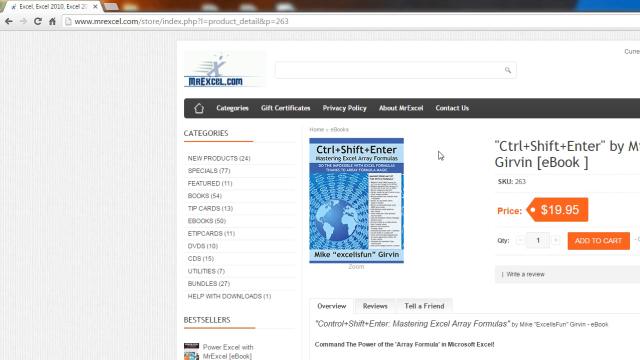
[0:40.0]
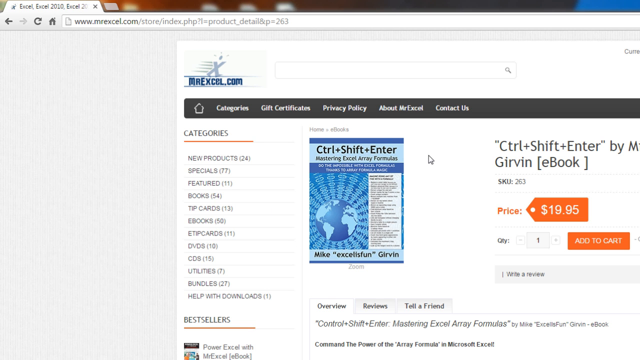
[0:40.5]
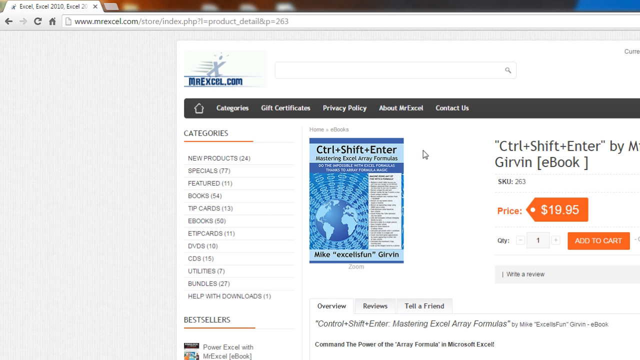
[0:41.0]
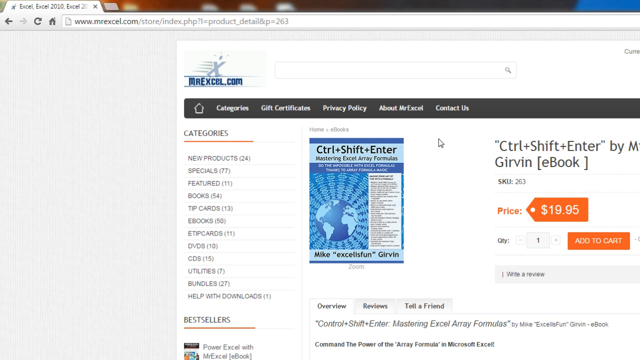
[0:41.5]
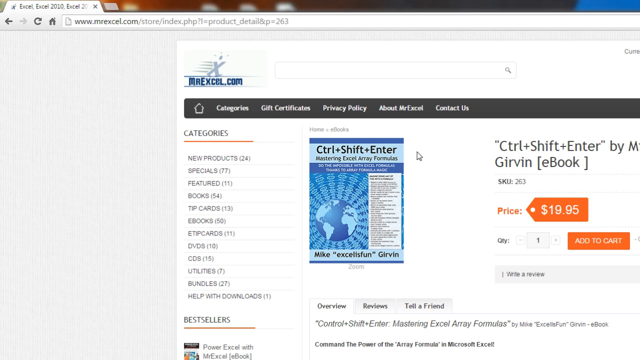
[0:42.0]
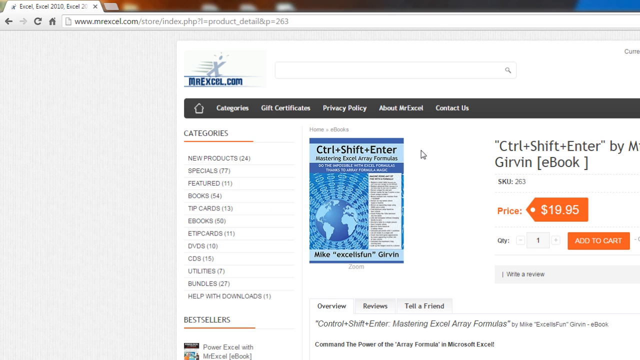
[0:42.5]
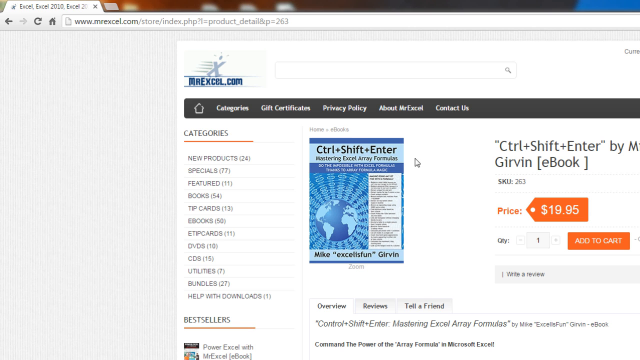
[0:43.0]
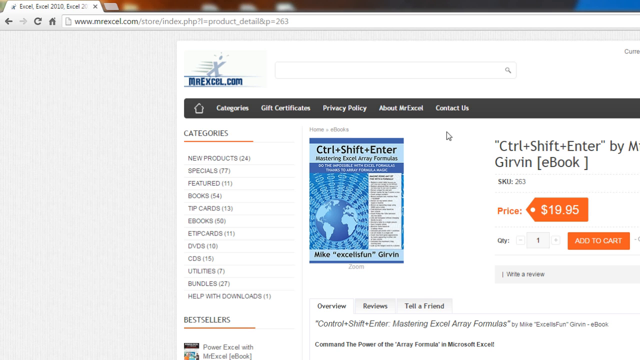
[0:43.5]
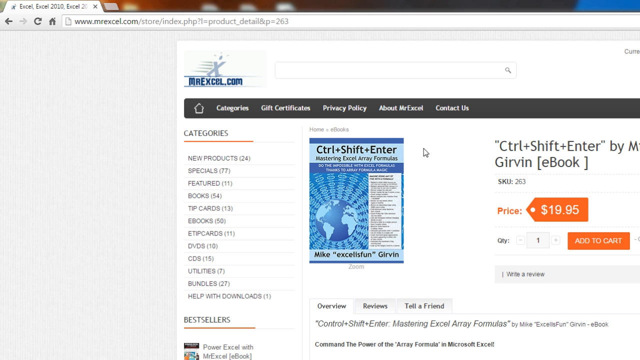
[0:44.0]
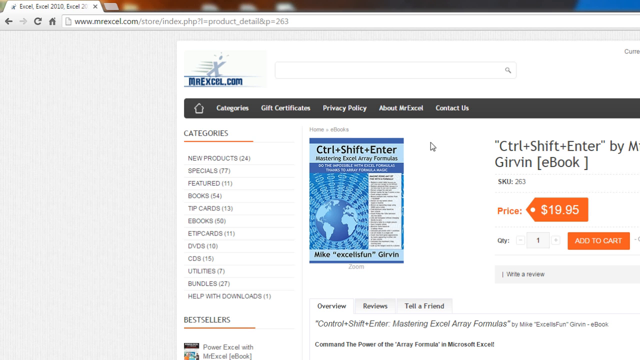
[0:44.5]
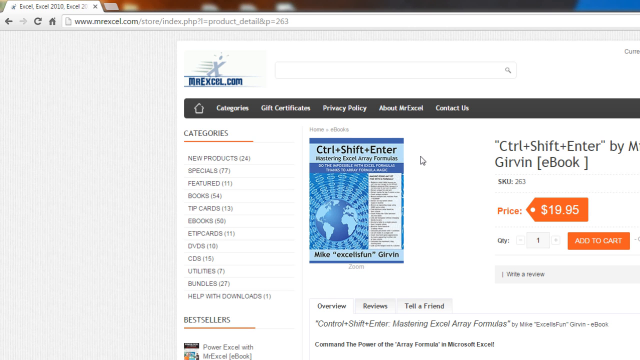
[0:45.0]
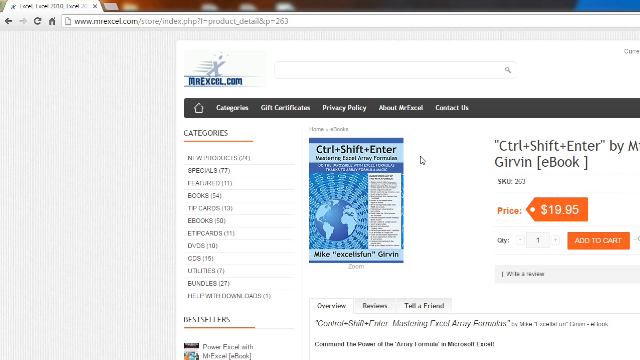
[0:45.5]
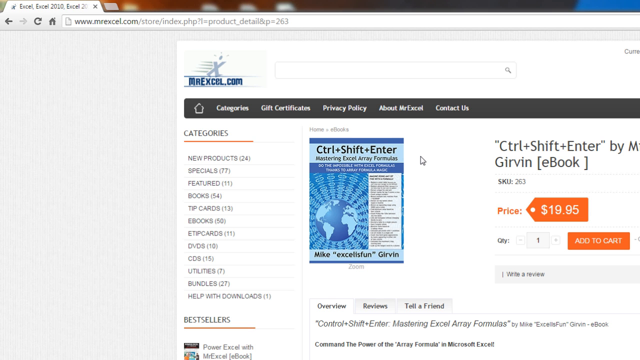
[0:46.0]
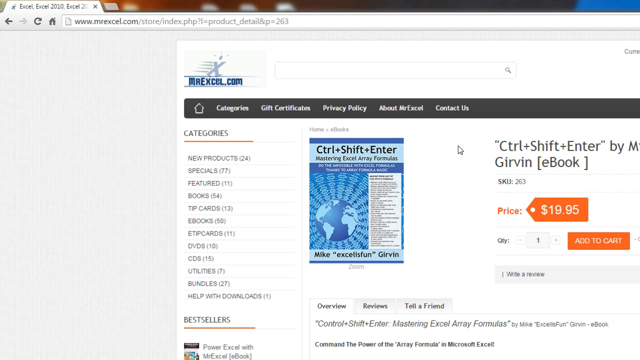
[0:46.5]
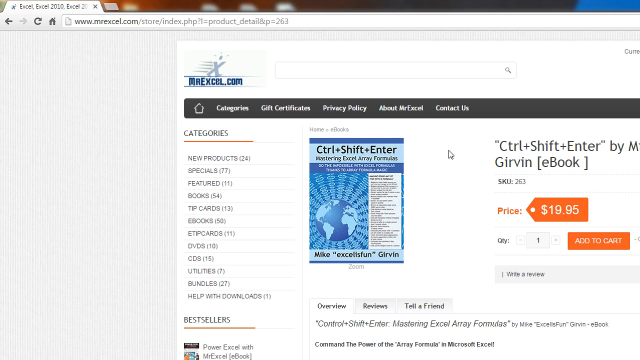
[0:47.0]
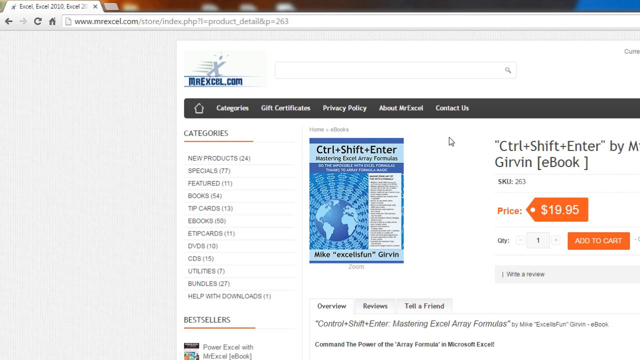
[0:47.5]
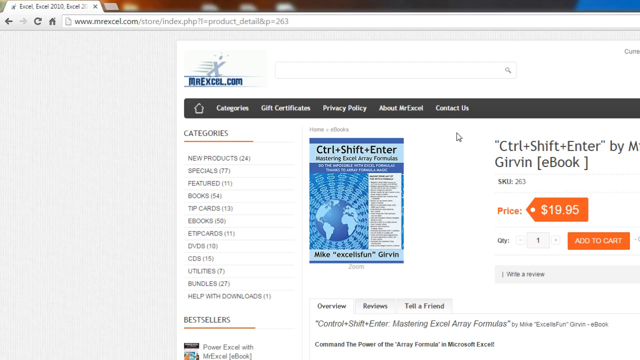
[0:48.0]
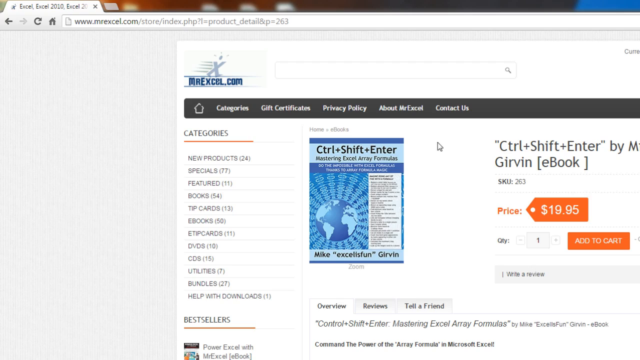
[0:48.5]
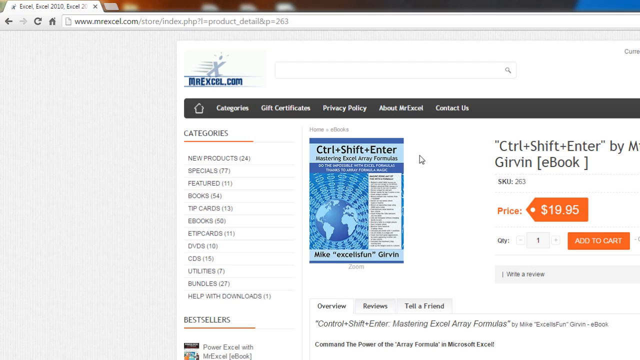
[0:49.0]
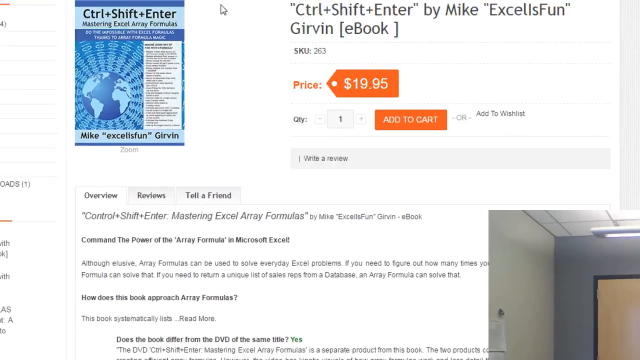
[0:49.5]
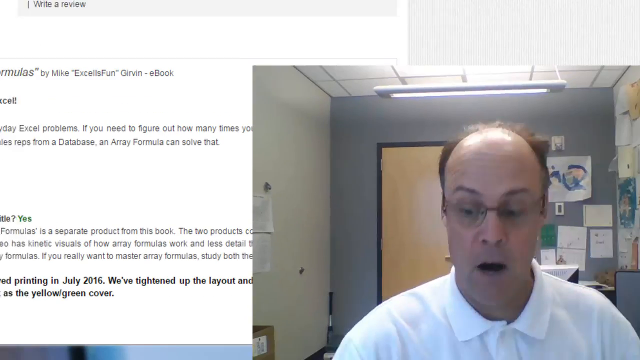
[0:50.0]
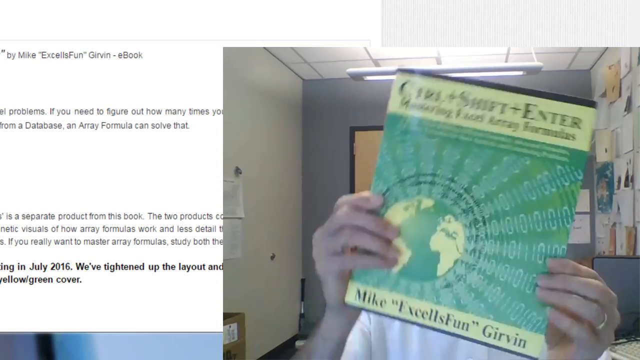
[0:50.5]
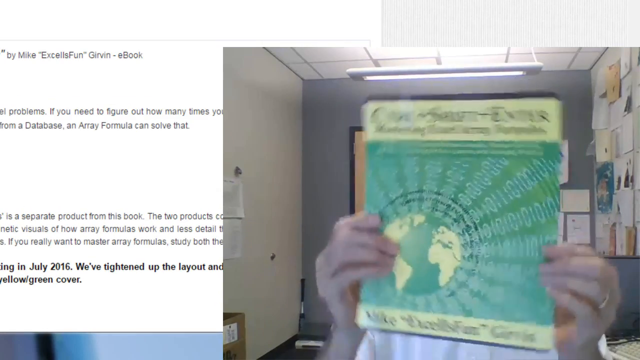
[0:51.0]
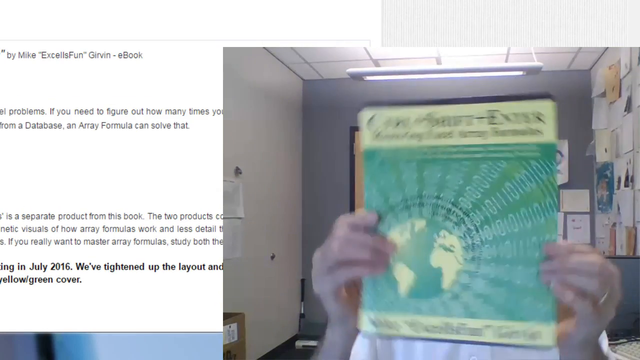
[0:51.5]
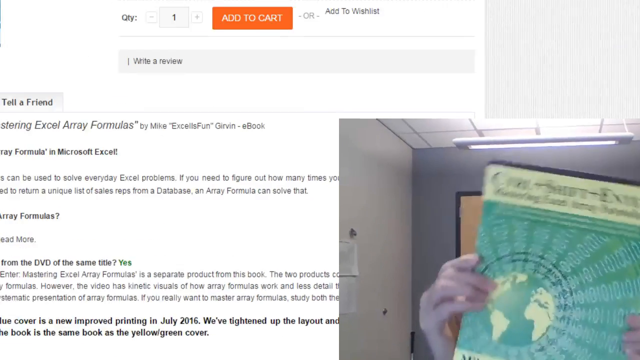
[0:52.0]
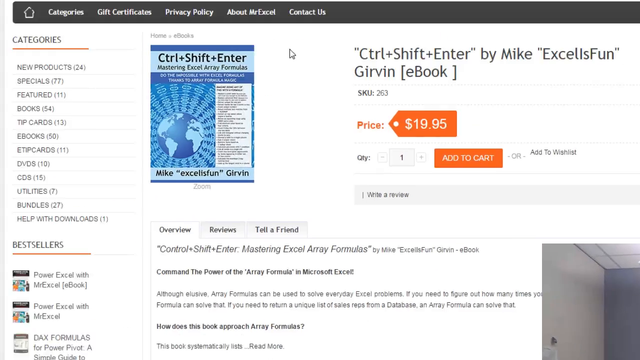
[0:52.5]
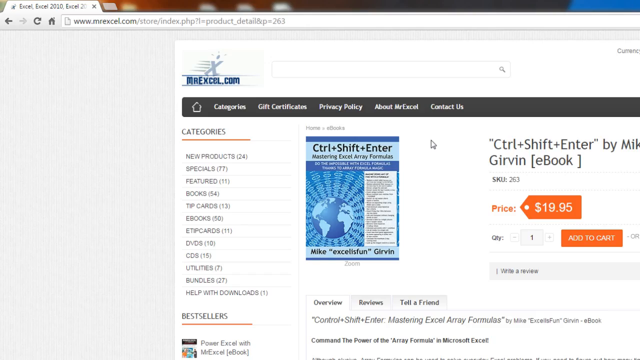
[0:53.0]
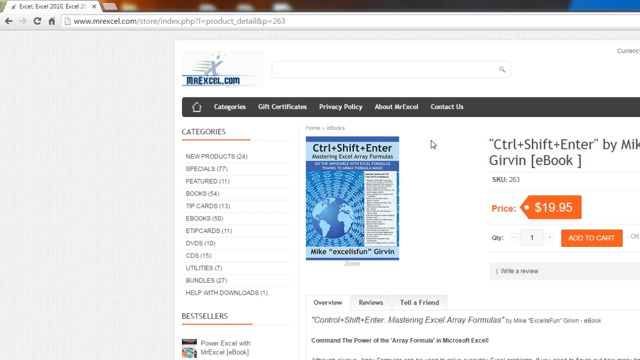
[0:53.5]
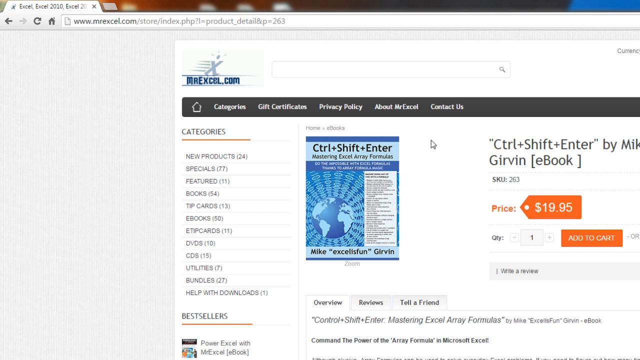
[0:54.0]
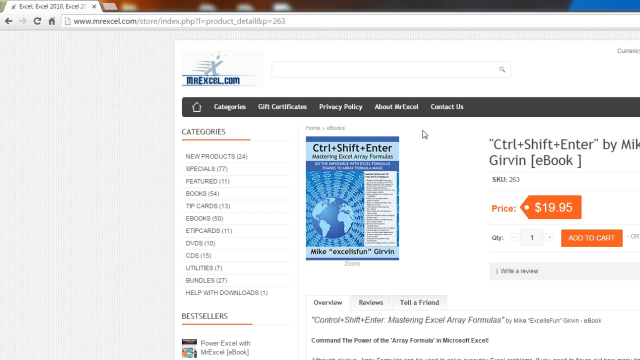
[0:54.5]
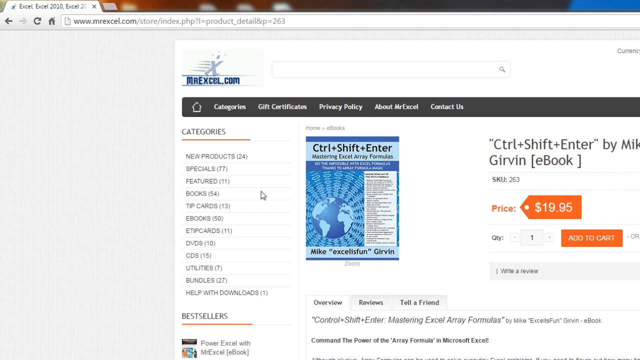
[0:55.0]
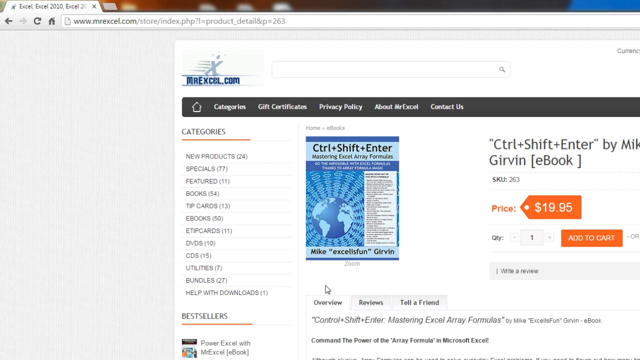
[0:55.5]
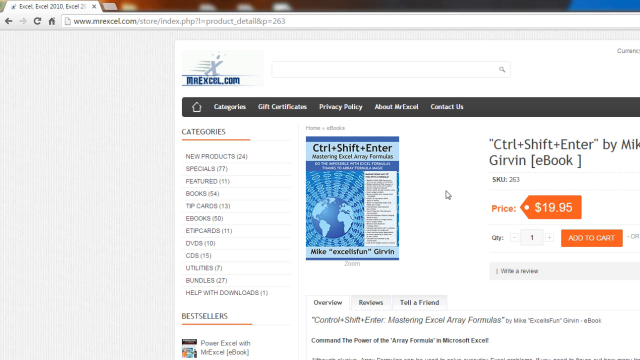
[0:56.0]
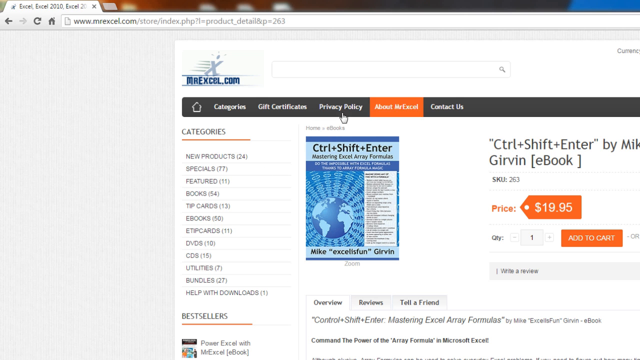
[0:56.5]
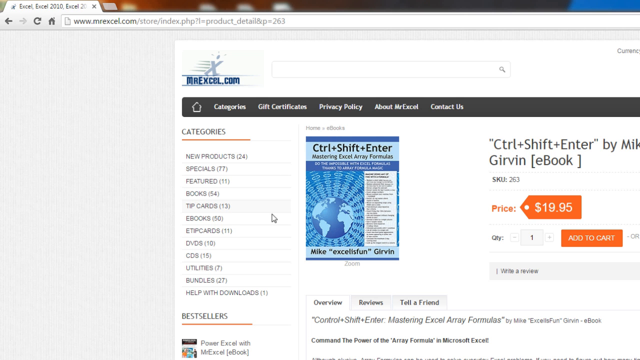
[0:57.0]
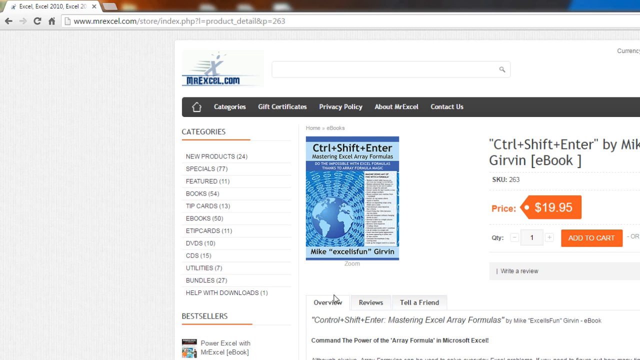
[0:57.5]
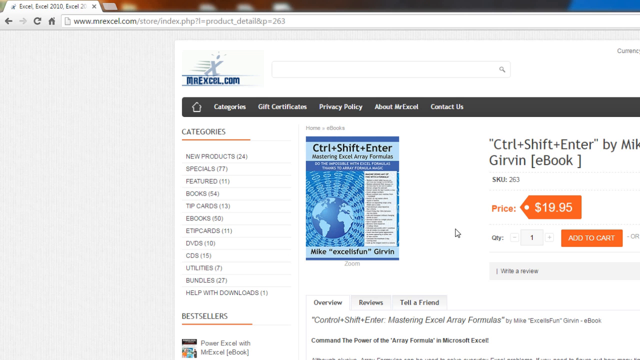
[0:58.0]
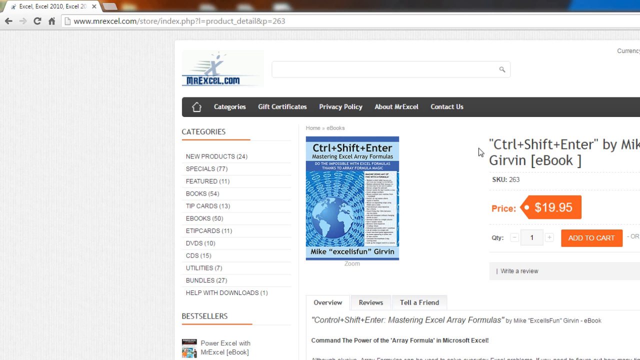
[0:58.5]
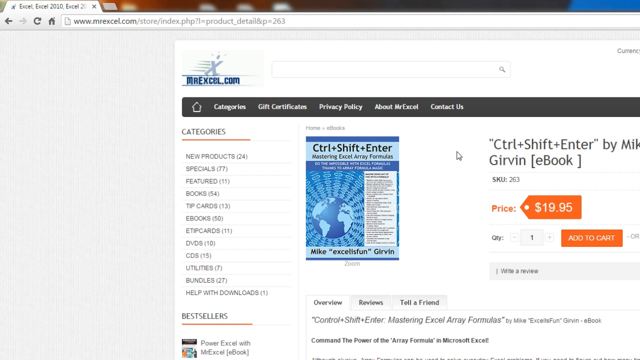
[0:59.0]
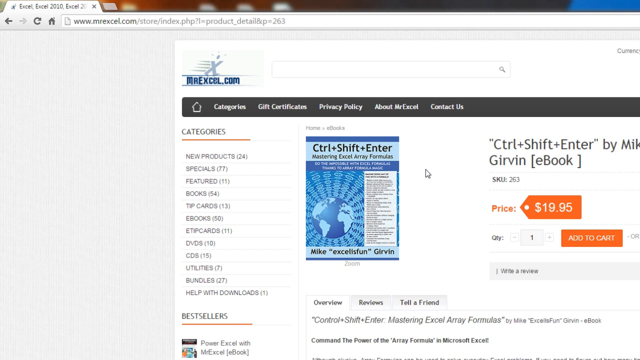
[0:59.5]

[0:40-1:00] Someone is recording their desktop computer screen, with a web browser open to a product listing on the MrExcel.com website: the Control plus Shift plus Enter by Mike Excel's Fun Girvin eBook, priced at $19.95. The view is zoomed in towards the top left of the web page, showing just the title. The mouse cursor is resting between a picture of the book's front cover and the pricing and listing of the book, and the user rapidly shakes it left and right in rapid succession. The video then slowly pans towards the bottom right, showing a webcam in the bottom right corner, where a similar version of the book that is green and yellow, with the same title and author, is held up. The view then pans back to the cover pictured in the listing, which is the same cover except blue instead of yellow and green. The user circles the mouse cursor around this cover multiple times and then scrolls down on the listing.